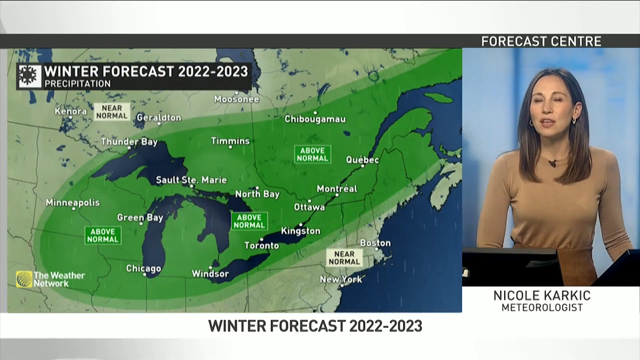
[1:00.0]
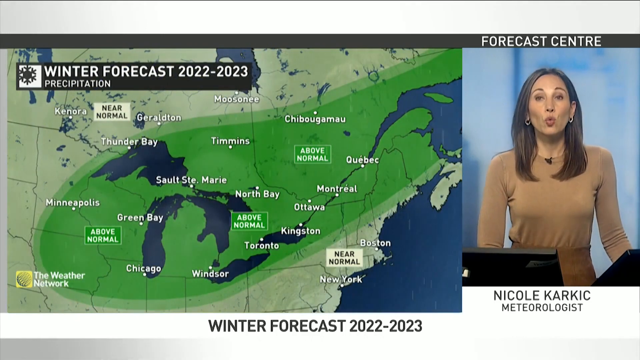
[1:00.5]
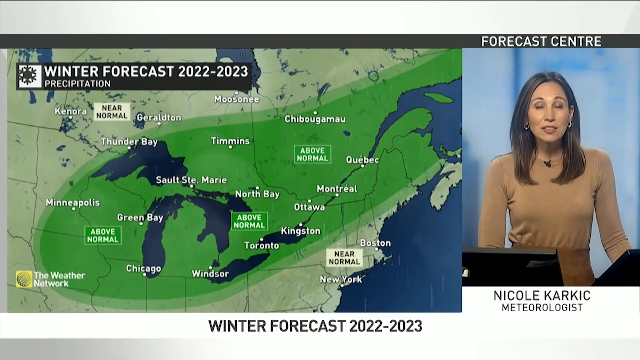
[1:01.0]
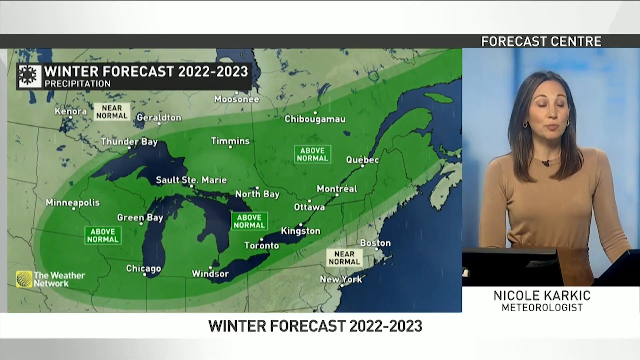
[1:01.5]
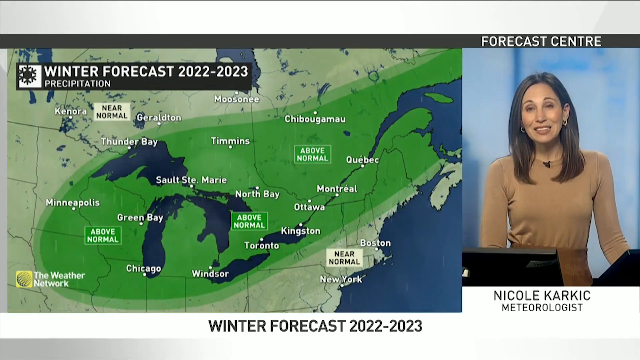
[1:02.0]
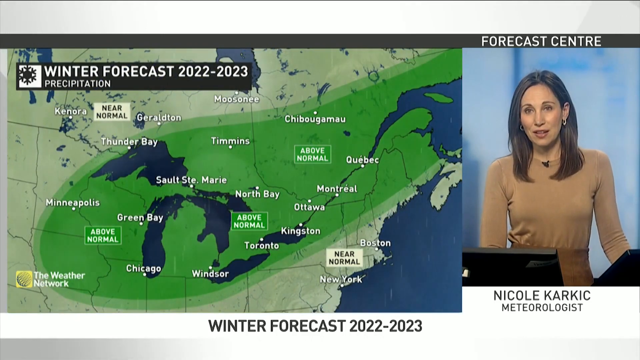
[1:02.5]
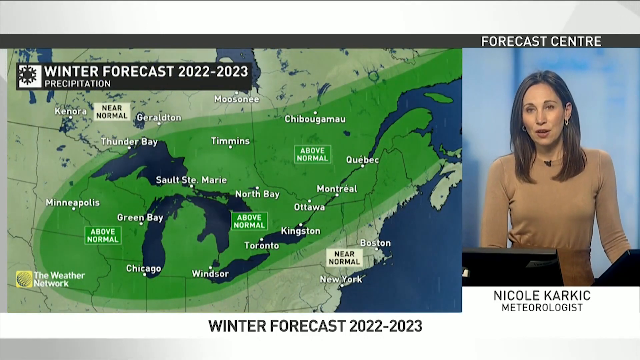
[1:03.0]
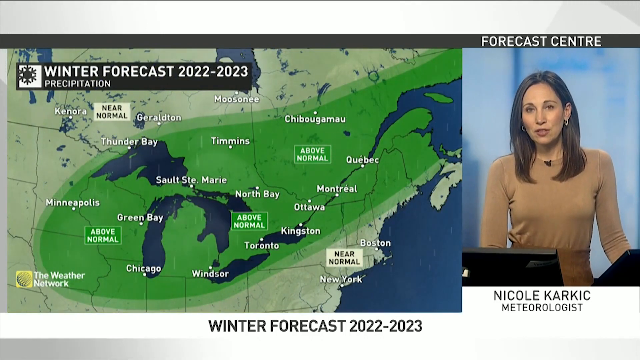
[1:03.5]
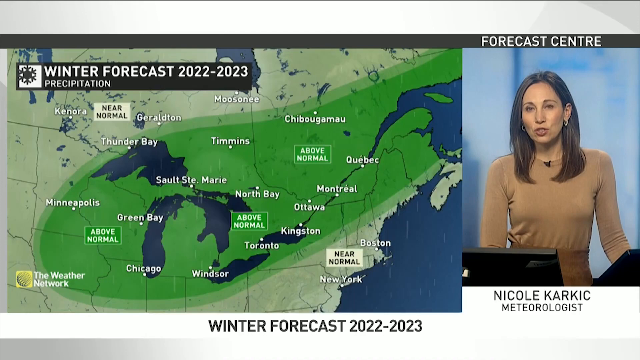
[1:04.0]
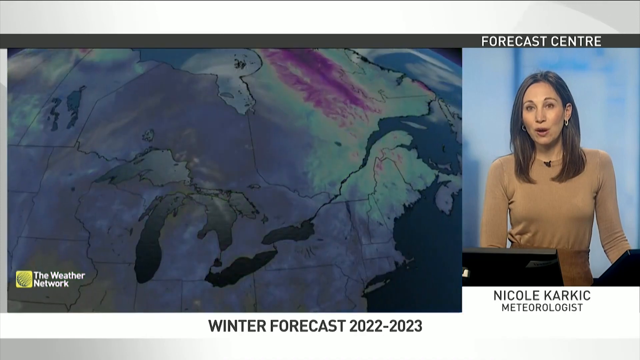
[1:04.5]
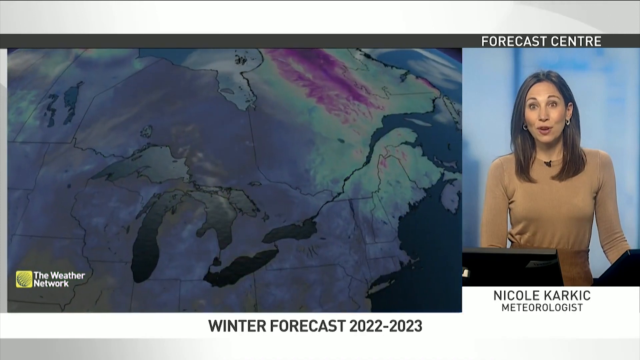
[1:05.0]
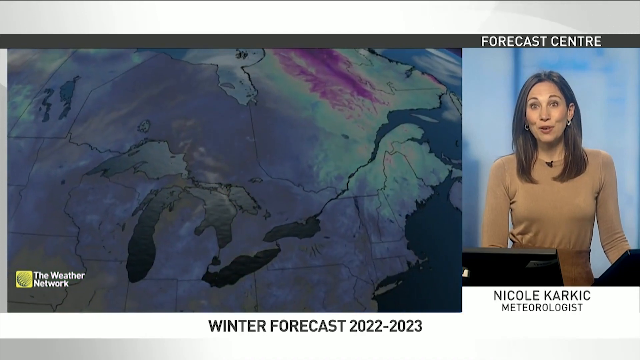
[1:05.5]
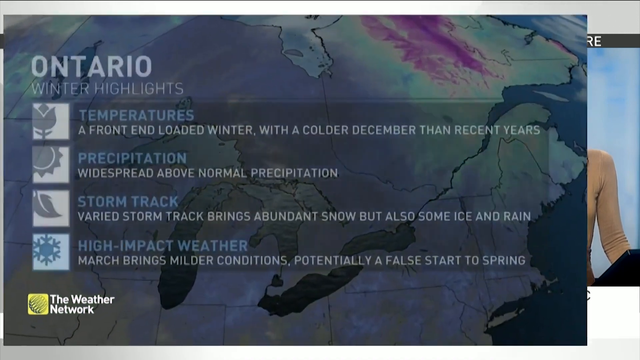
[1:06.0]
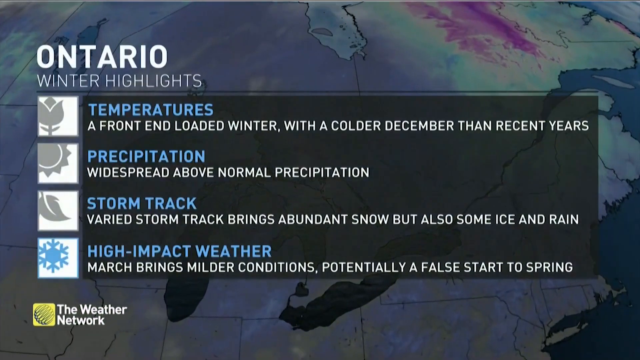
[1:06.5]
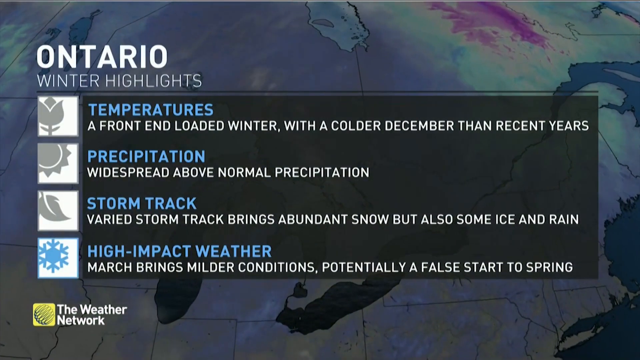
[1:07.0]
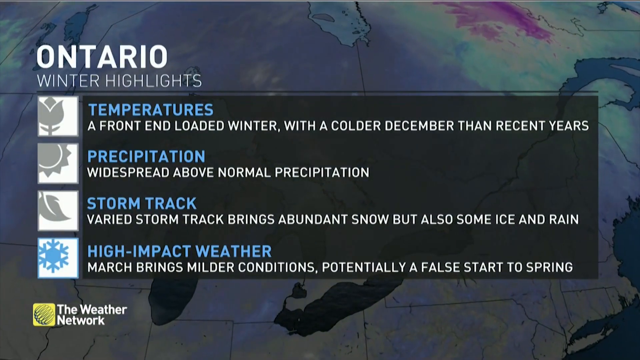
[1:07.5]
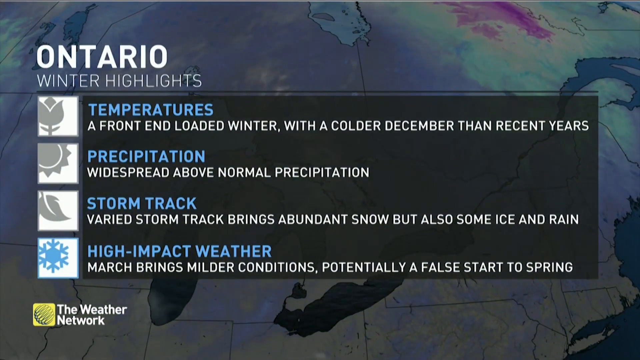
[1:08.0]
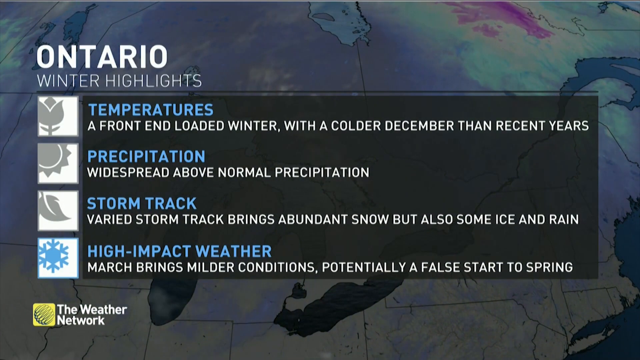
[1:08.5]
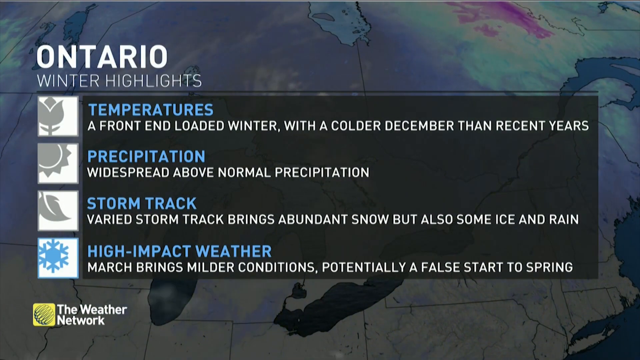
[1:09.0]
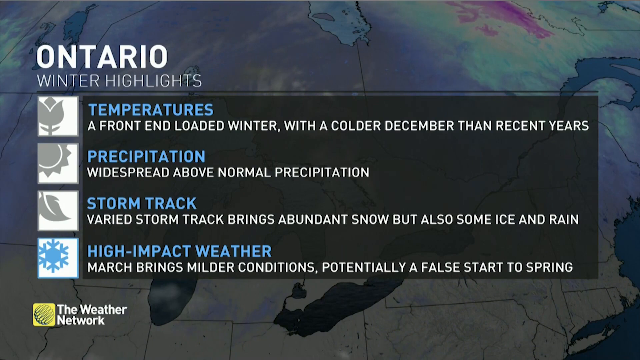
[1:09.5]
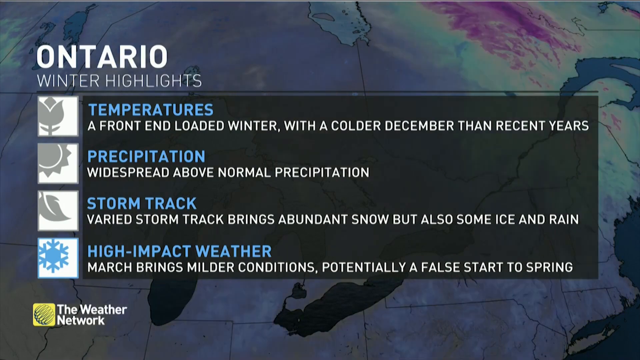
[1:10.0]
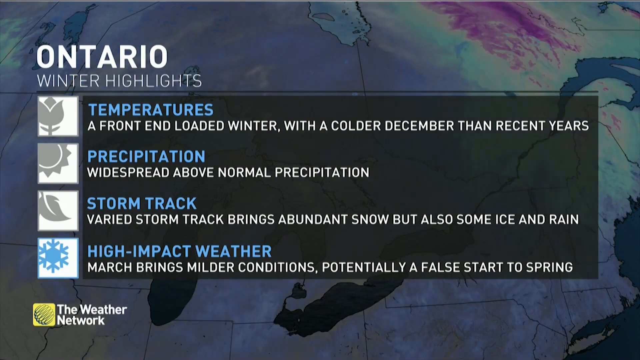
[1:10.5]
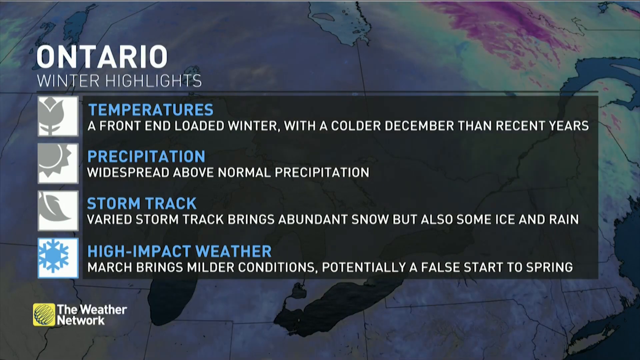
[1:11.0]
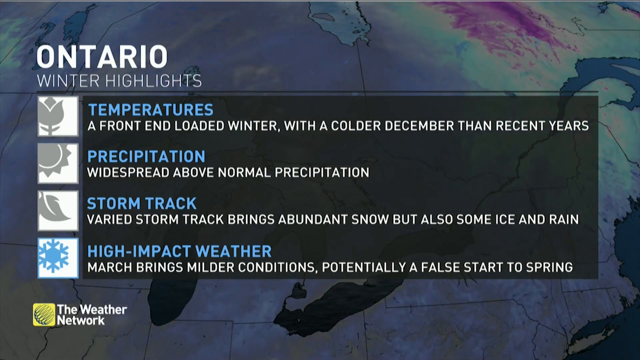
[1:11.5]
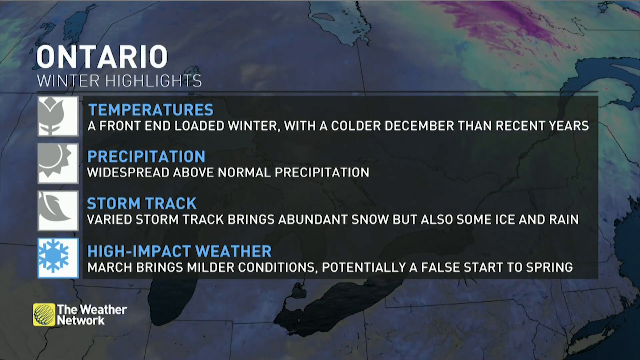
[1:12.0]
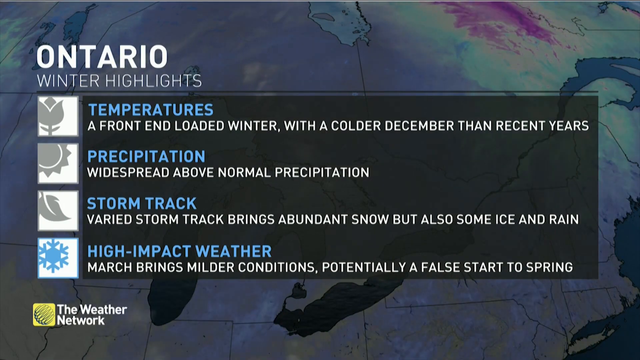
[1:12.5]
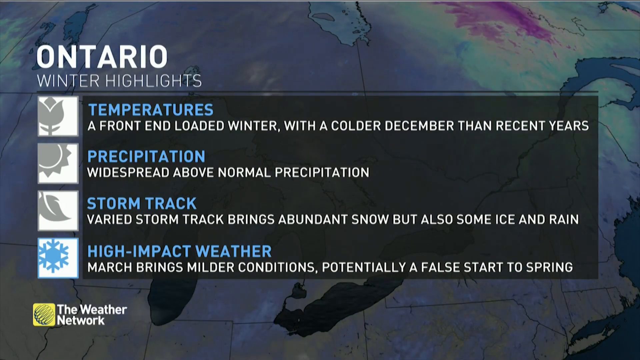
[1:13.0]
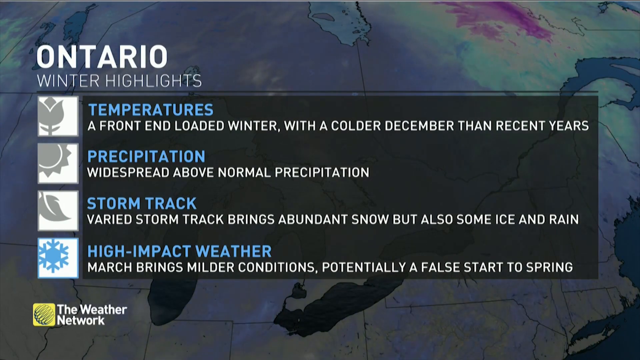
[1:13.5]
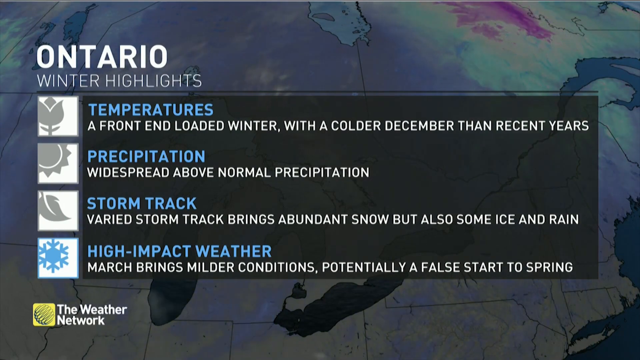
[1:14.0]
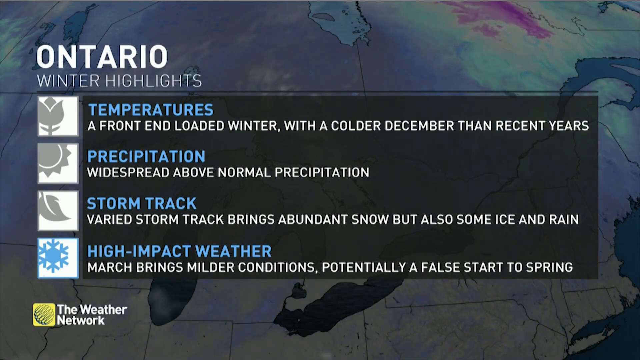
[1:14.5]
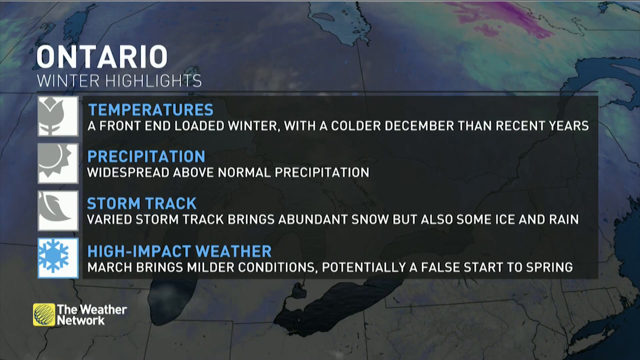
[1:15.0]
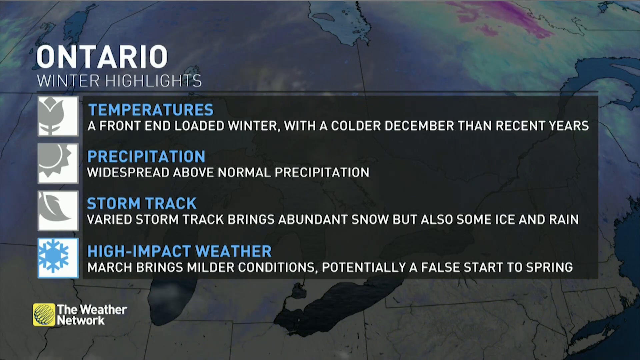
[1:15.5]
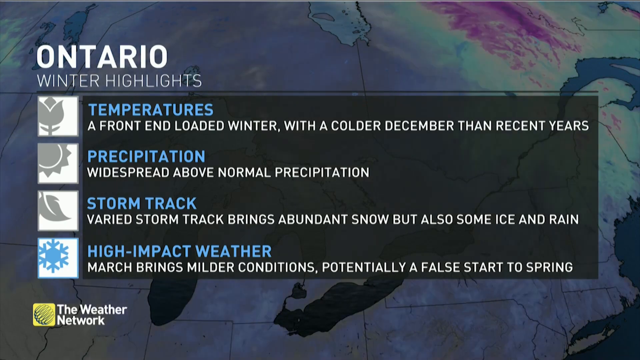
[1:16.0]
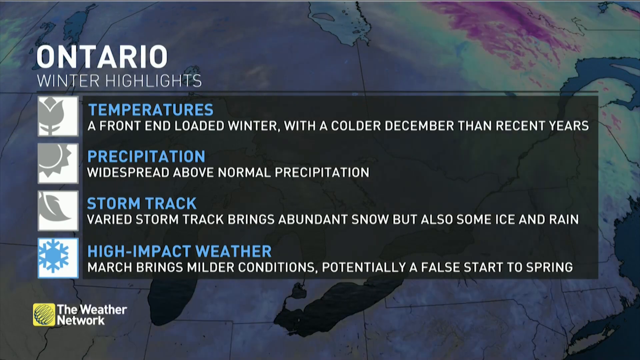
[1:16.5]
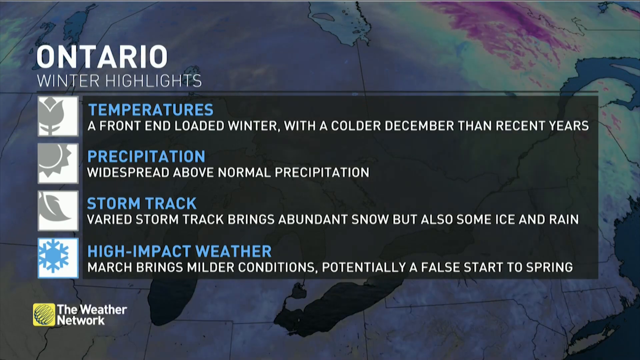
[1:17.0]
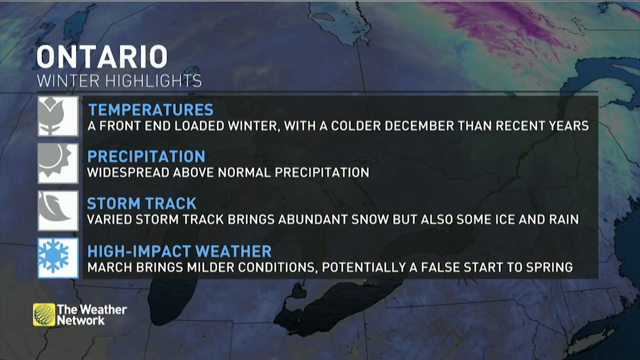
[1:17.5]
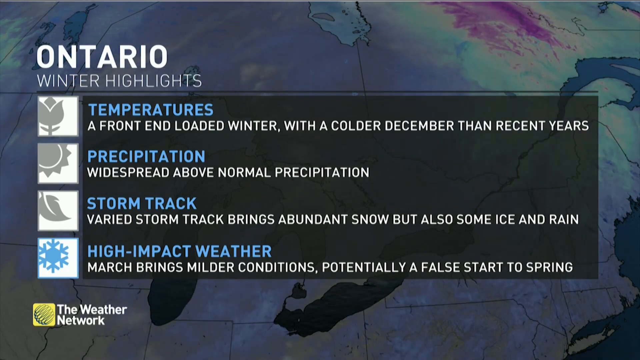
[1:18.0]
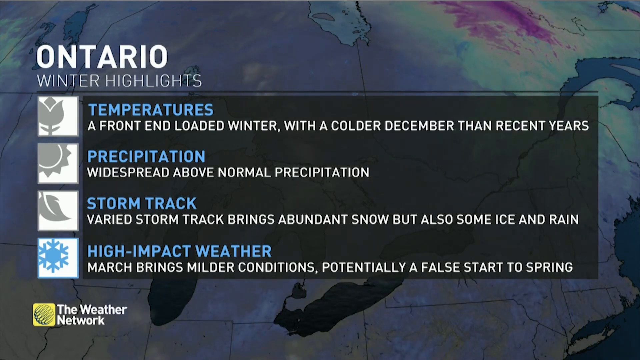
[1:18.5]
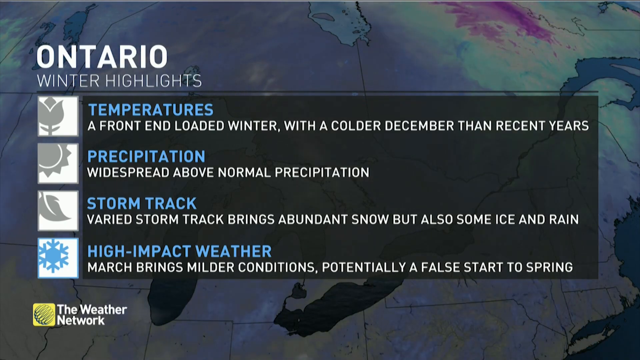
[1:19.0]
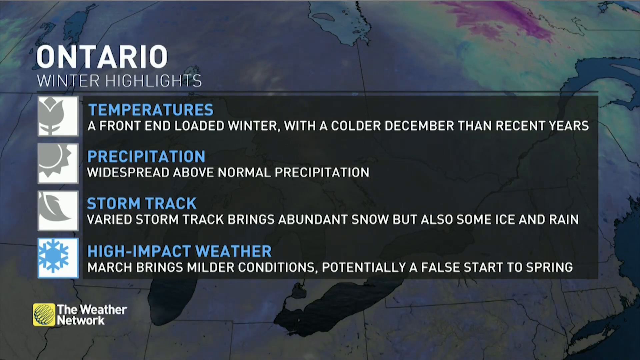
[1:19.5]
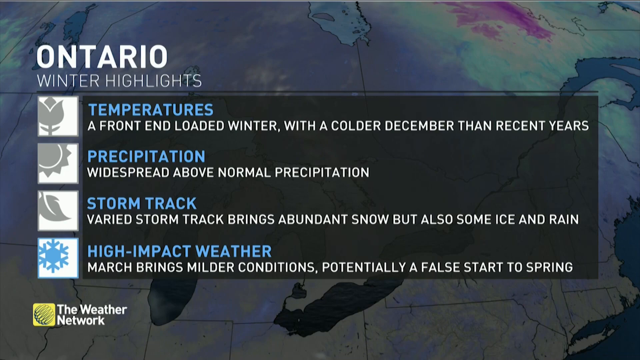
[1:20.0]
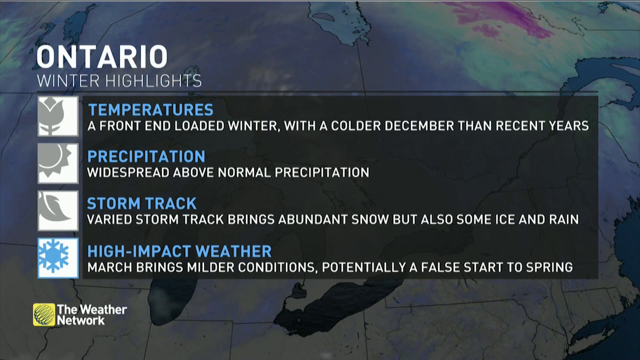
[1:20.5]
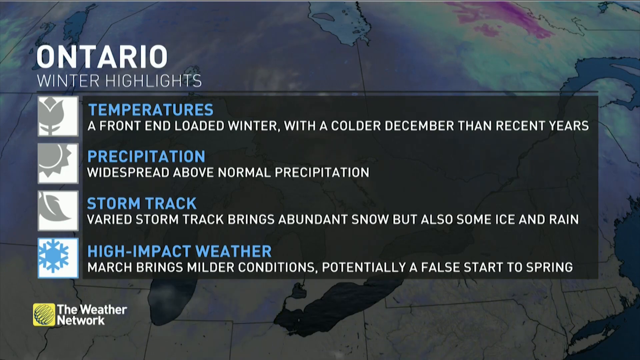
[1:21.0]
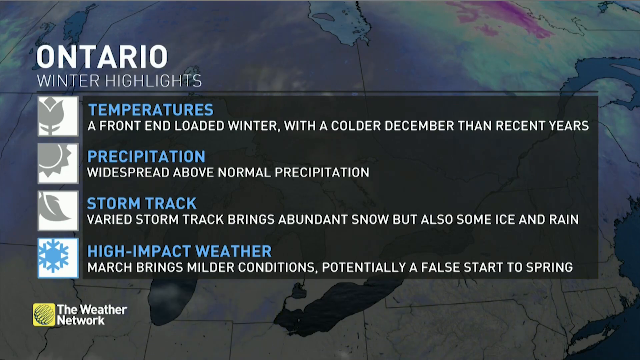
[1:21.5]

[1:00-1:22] A "winter highlights" screen shows information about temperatures and precipitation, including text reading "widespread above normal", along with a lot of other written information. A world map shows place names such as Timmis, Monterey, North Bay, Minipolis and Green Bay, which seem to be labeled above normal and near normal. A woman named Nicole Karkik describes the winter forecast for 2022-2023.